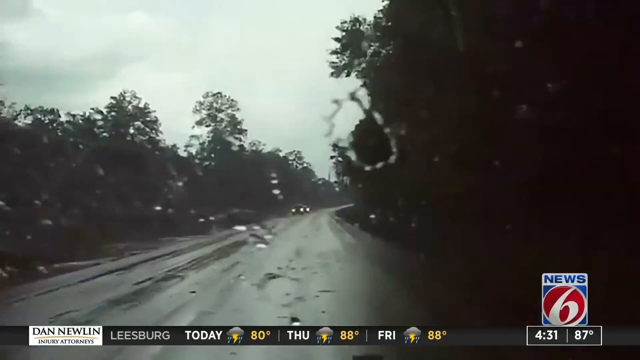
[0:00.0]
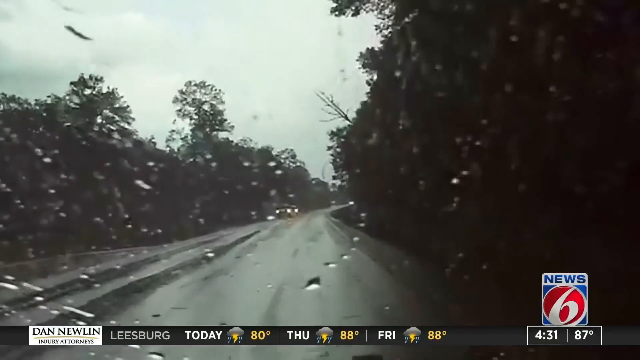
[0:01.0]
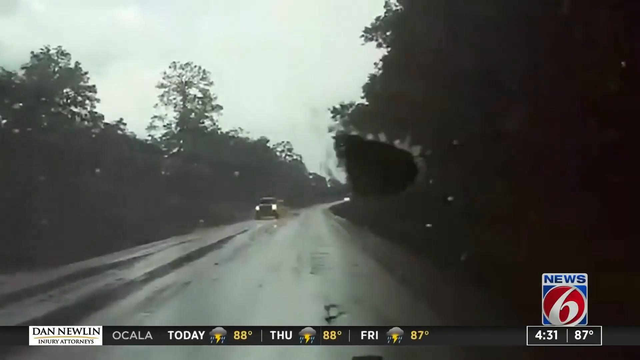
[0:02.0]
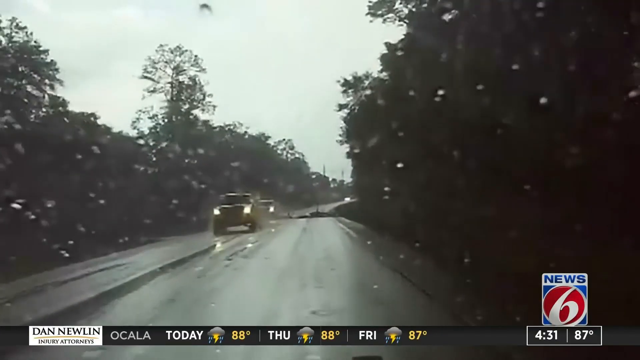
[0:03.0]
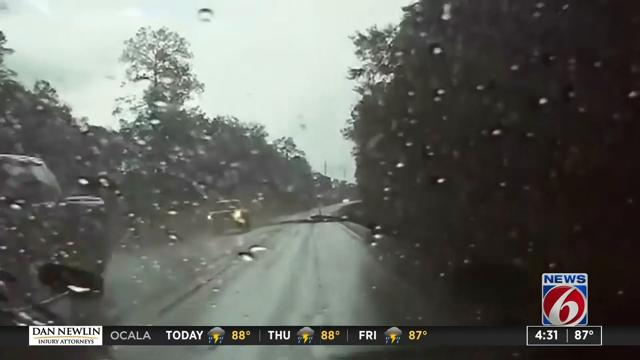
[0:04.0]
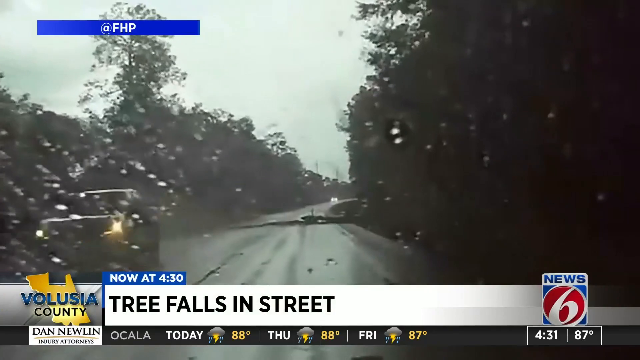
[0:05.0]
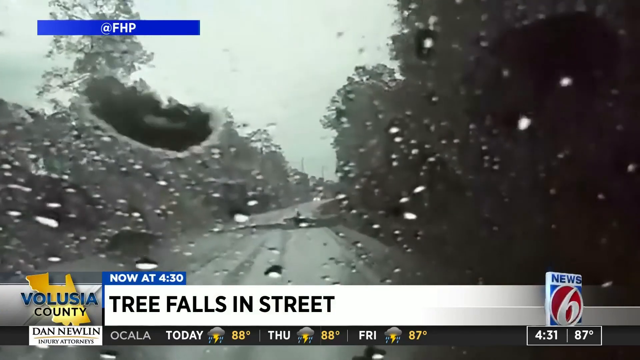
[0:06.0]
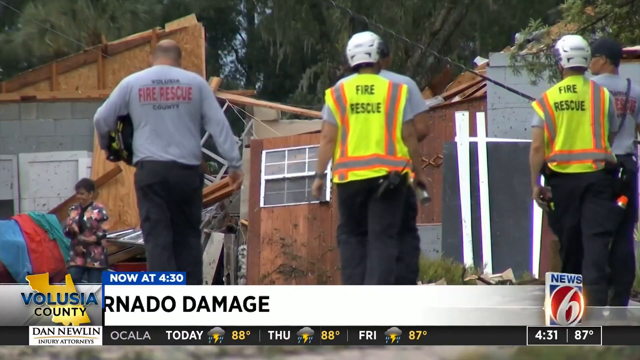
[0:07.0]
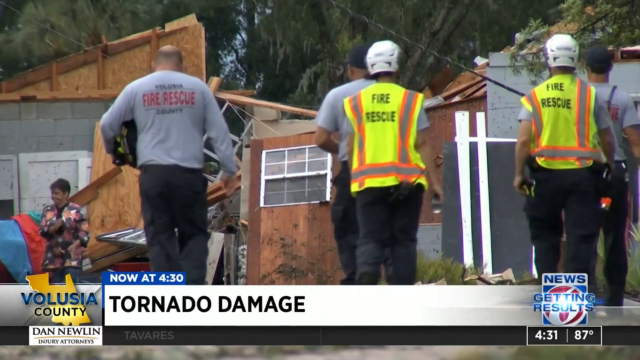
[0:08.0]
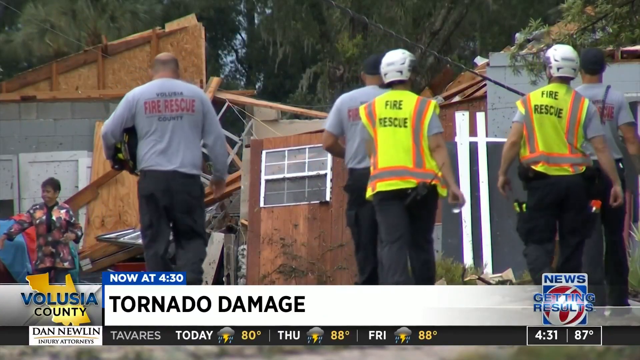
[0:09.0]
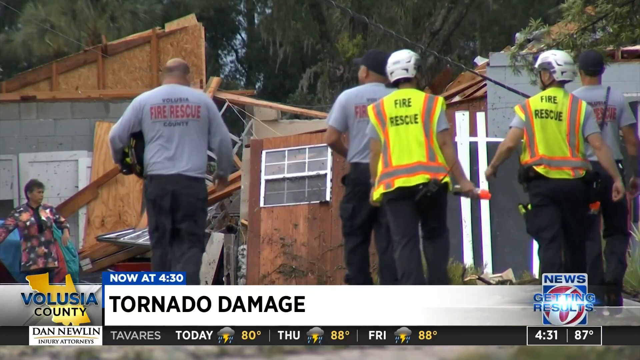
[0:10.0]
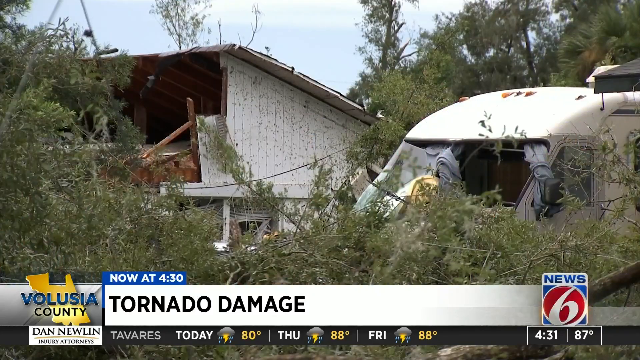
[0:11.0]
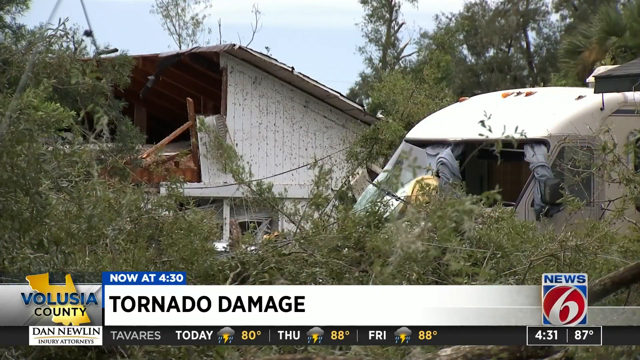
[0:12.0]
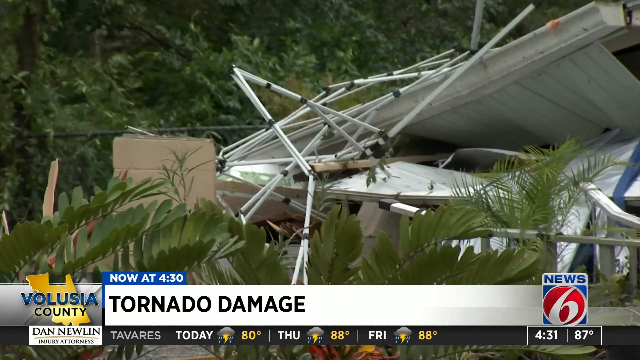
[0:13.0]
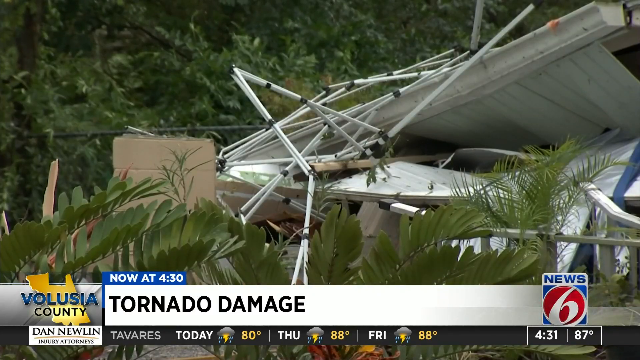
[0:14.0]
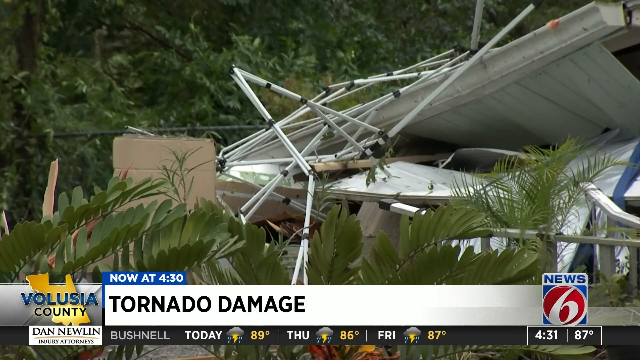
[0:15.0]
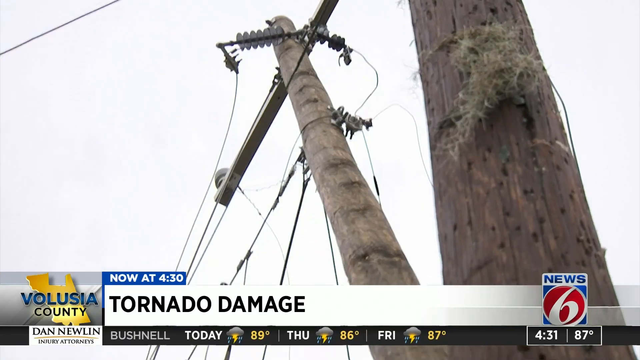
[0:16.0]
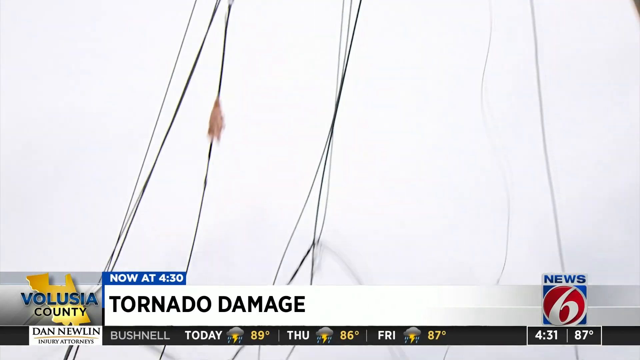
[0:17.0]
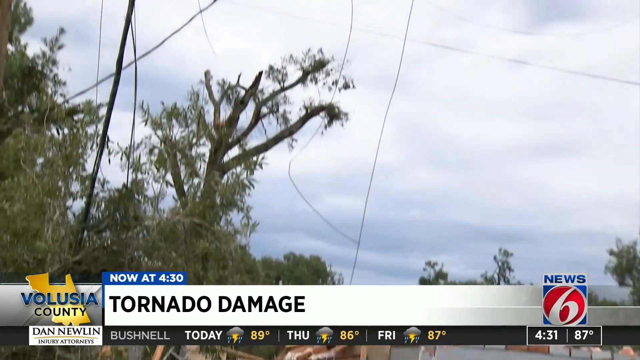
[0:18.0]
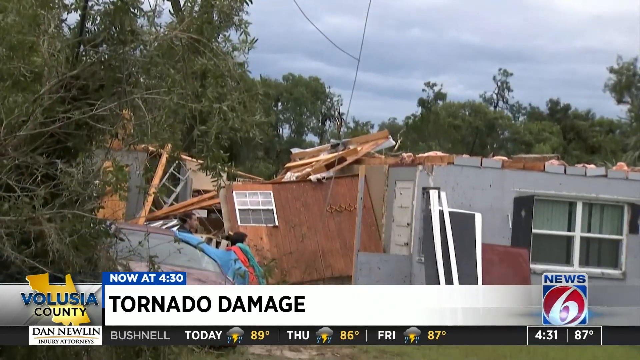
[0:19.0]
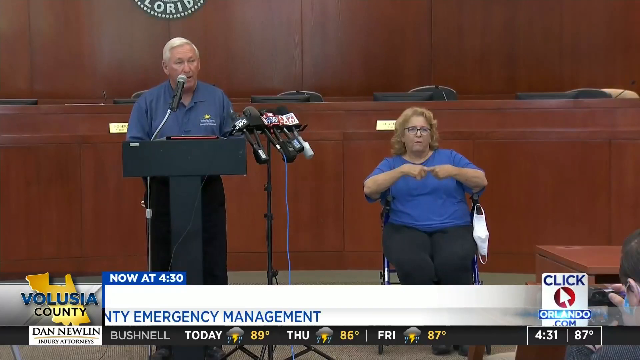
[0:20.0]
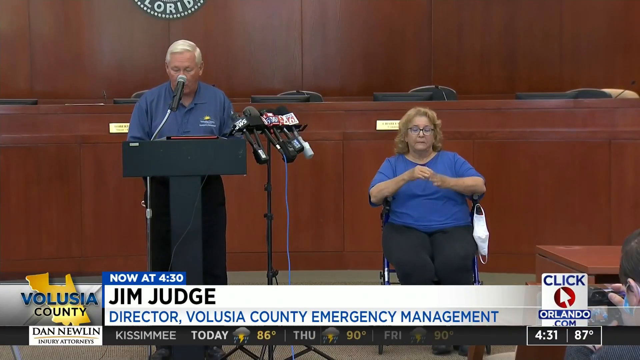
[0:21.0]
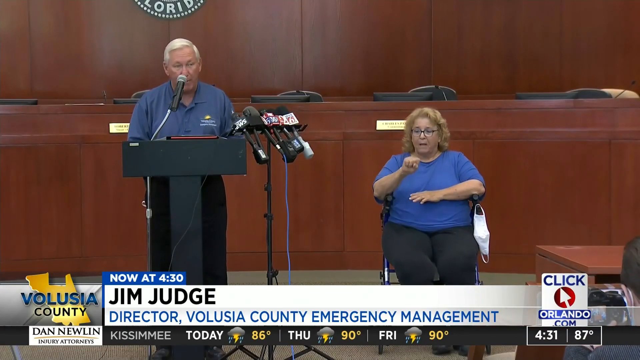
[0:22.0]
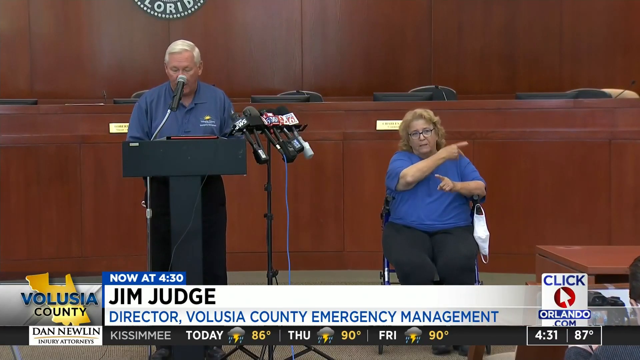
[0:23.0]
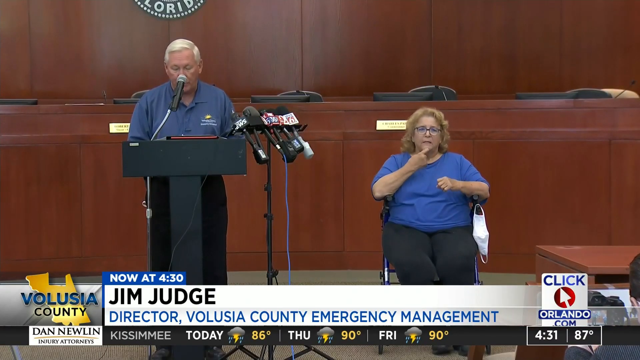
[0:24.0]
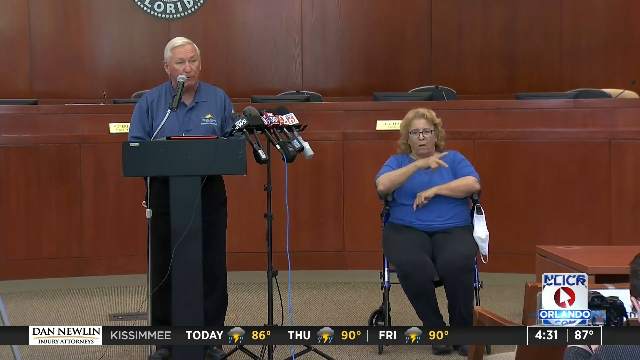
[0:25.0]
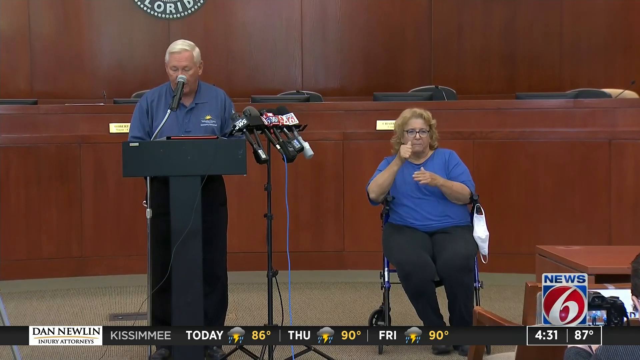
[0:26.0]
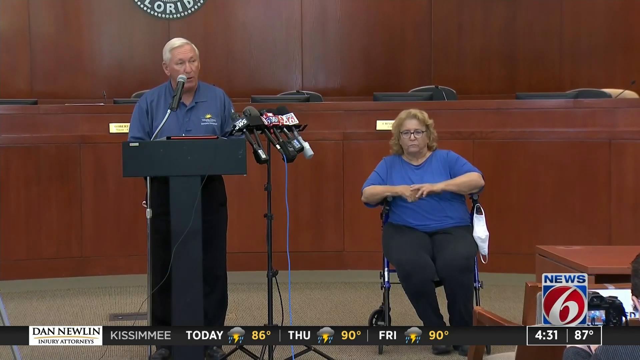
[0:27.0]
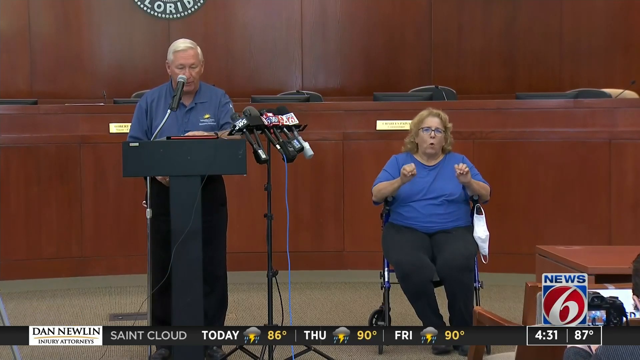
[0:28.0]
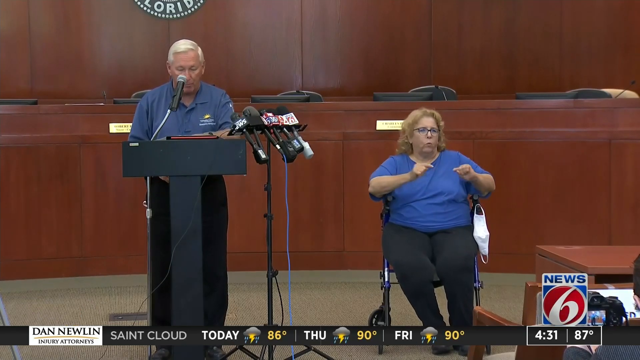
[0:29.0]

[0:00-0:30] Stormy weather fills the scene outside, and the roads look slick. A car comes toward the person filming, its headlights visible, while windshield wipers move up and down. The footage is from News Channel 6. A tree falls in the street in front of the cars, almost hitting them. The location is Volusia. An emergency fire rescue crew walks along, five people in neon yellow jackets and helmets. In the background there is a lot of storm damage: houses have fallen down, trees are down everywhere, and windows are broken. One structure apparently was once a house and has an open hole in its side; another house has fallen down. Debris is everywhere, with some trees in the front. Power poles are down and power lines are down over houses. A woman in a wheelchair translates in sign language, moving her arms, while someone stands up and talks. A man is talking.